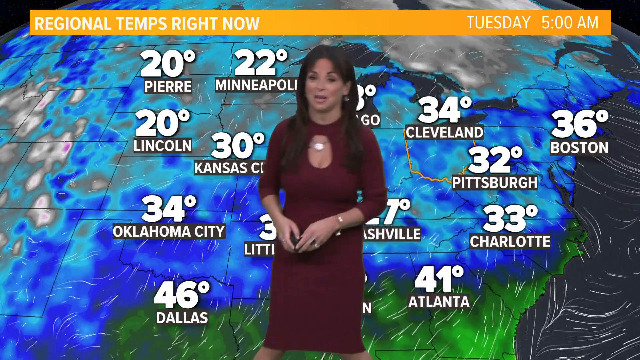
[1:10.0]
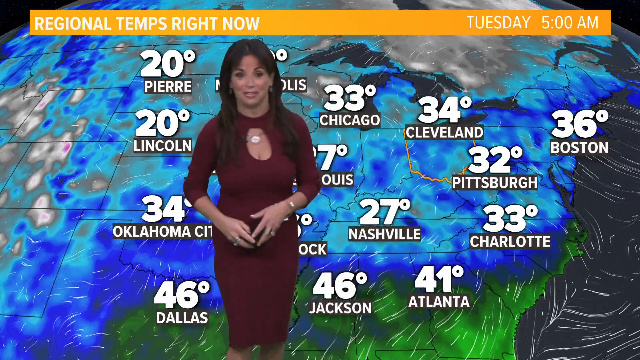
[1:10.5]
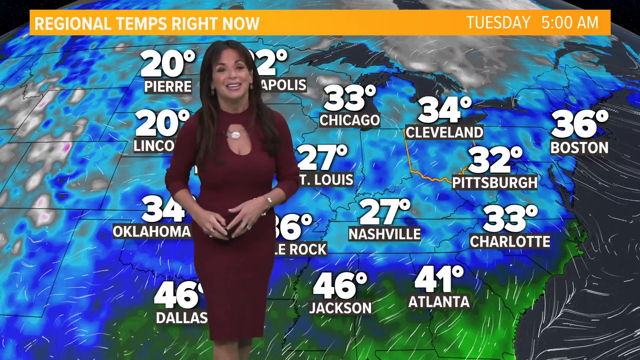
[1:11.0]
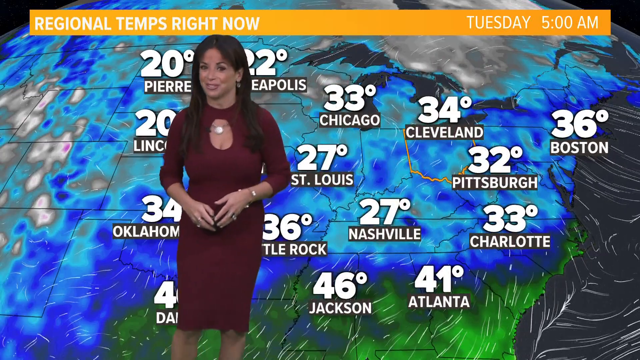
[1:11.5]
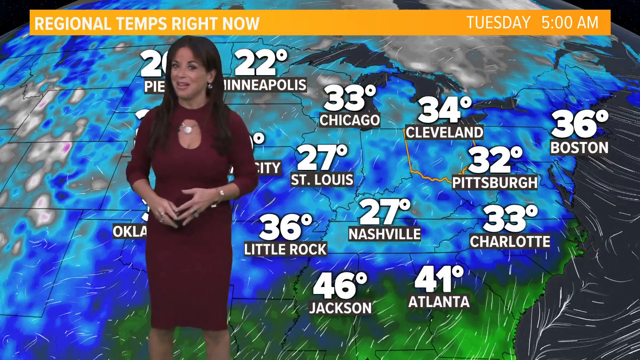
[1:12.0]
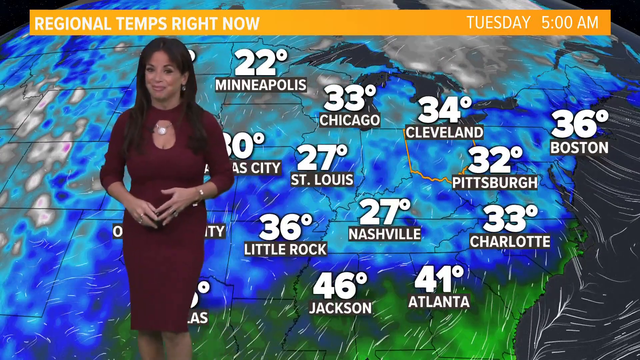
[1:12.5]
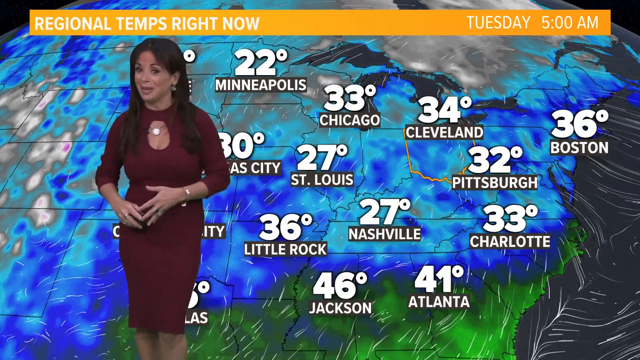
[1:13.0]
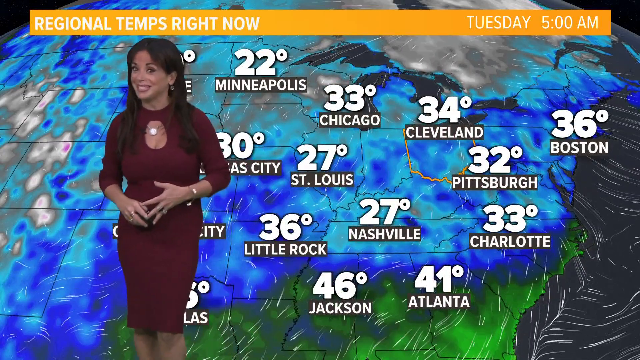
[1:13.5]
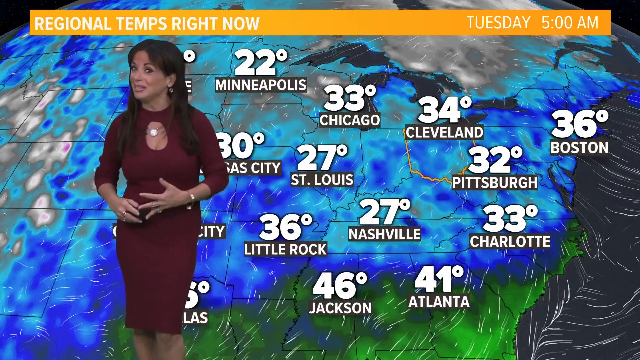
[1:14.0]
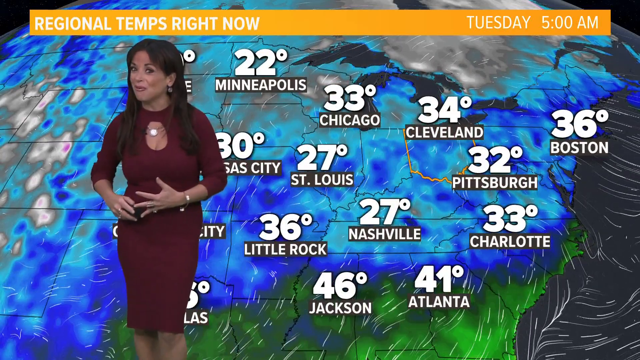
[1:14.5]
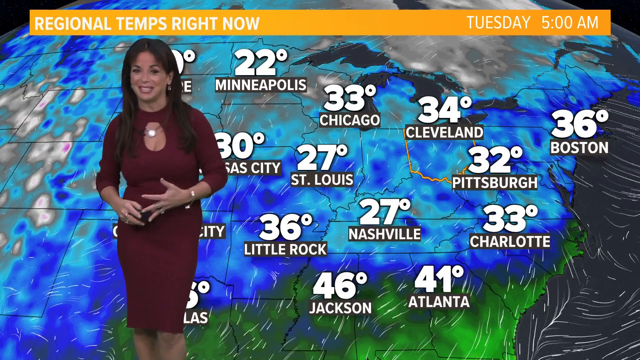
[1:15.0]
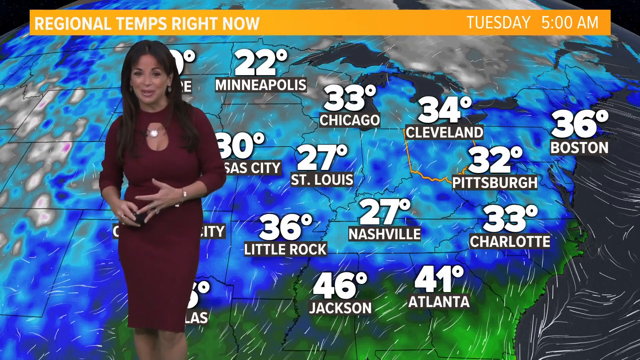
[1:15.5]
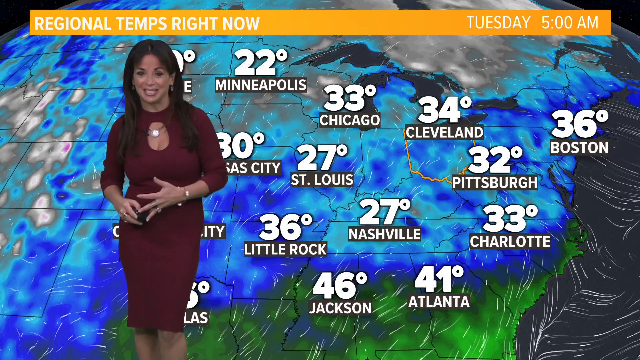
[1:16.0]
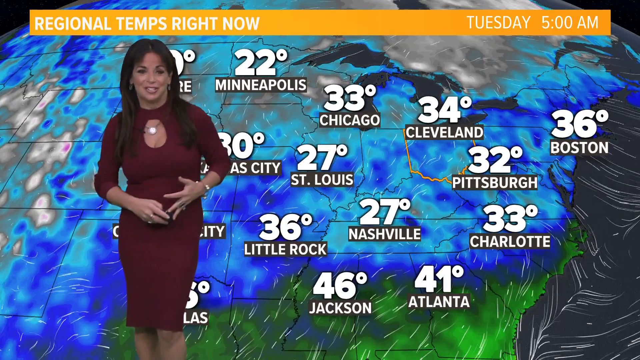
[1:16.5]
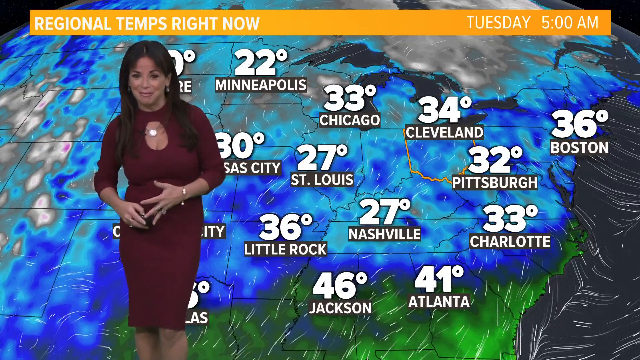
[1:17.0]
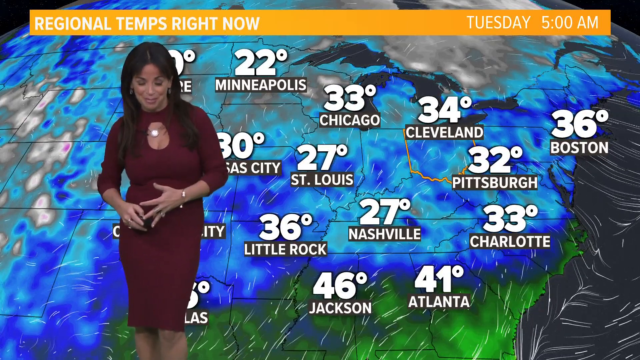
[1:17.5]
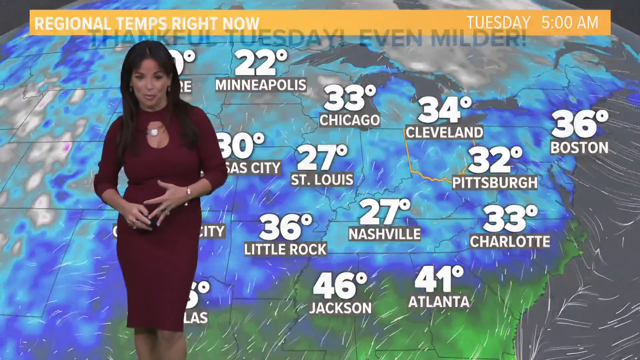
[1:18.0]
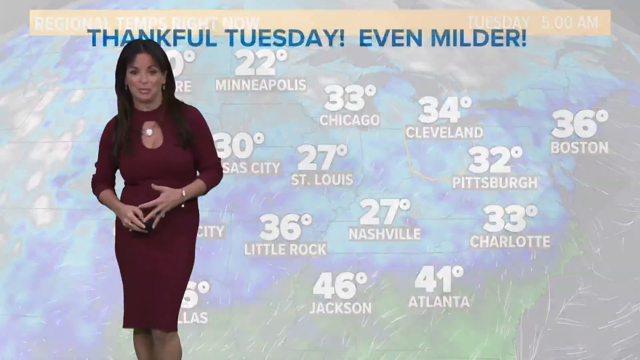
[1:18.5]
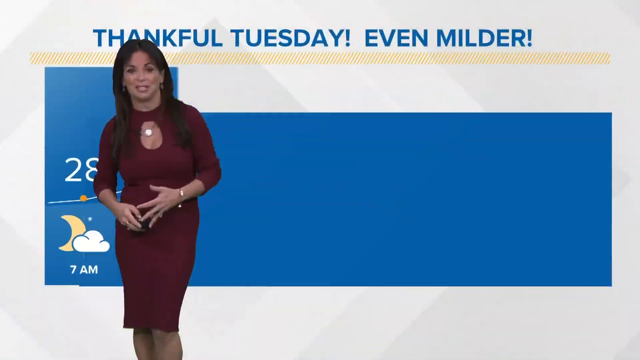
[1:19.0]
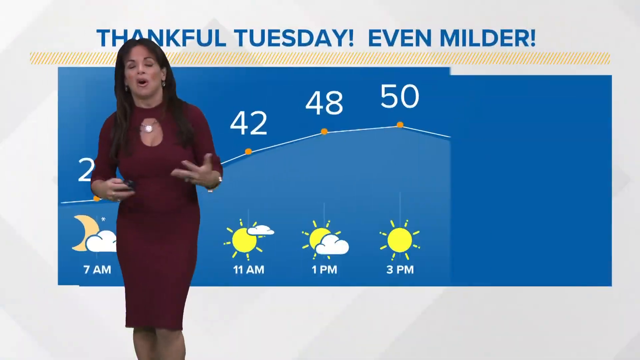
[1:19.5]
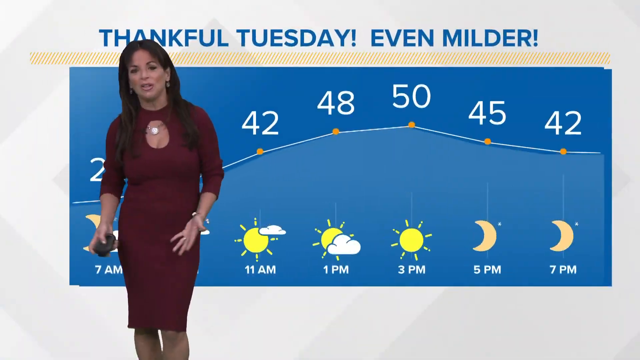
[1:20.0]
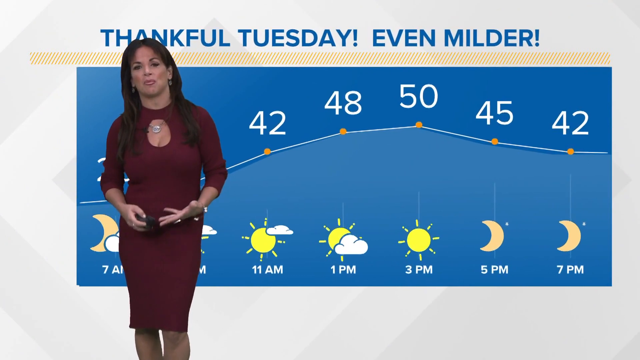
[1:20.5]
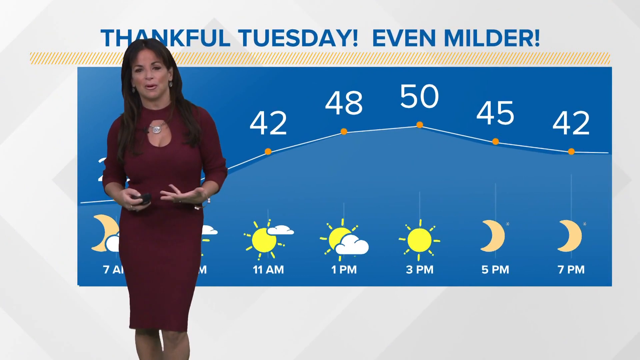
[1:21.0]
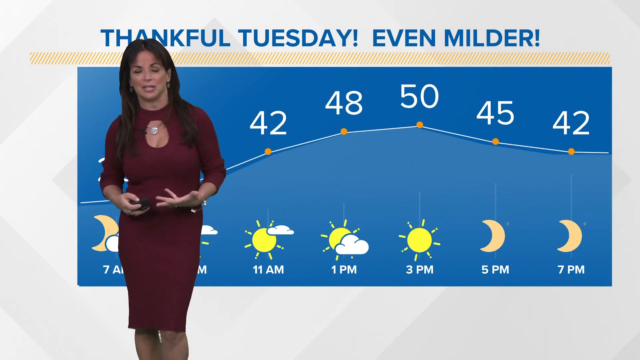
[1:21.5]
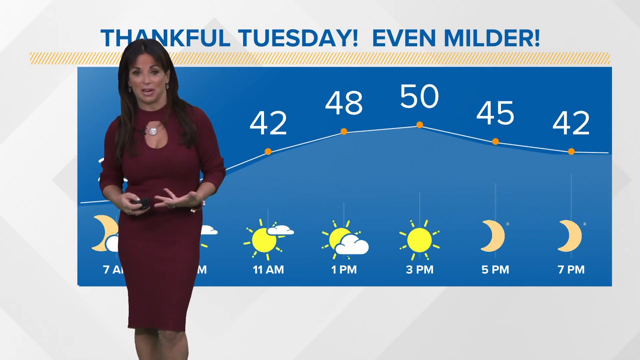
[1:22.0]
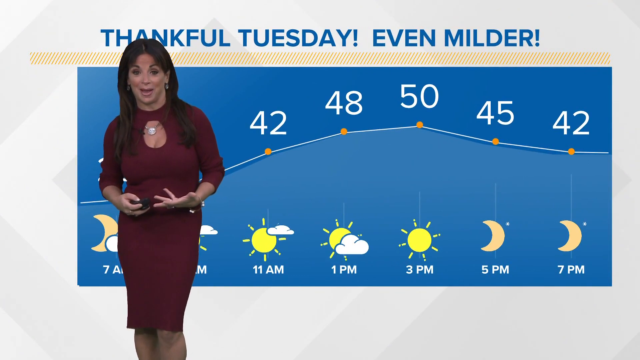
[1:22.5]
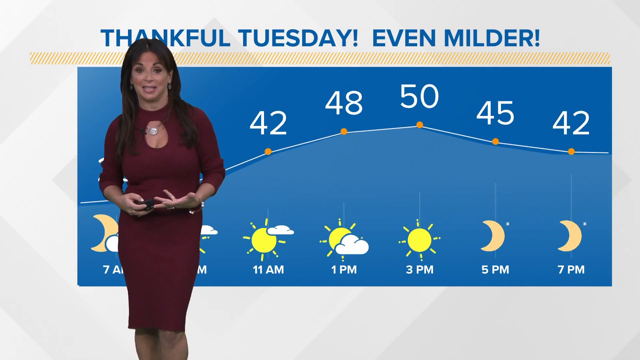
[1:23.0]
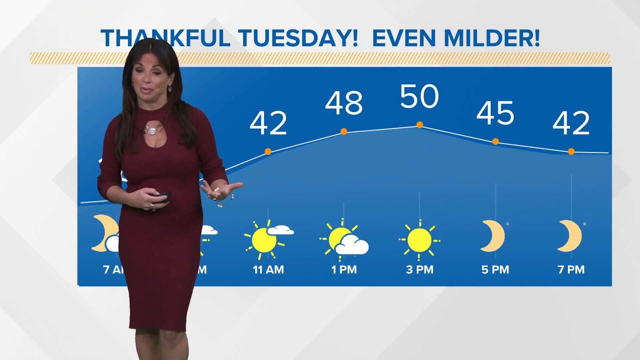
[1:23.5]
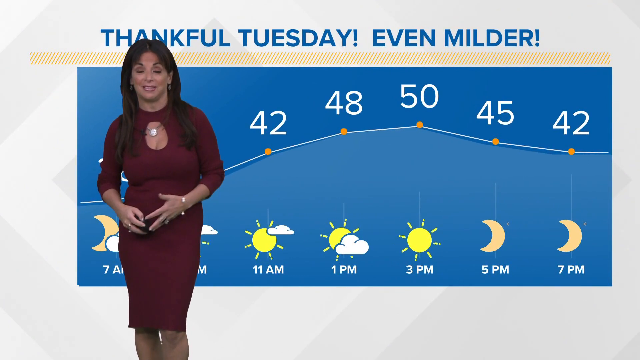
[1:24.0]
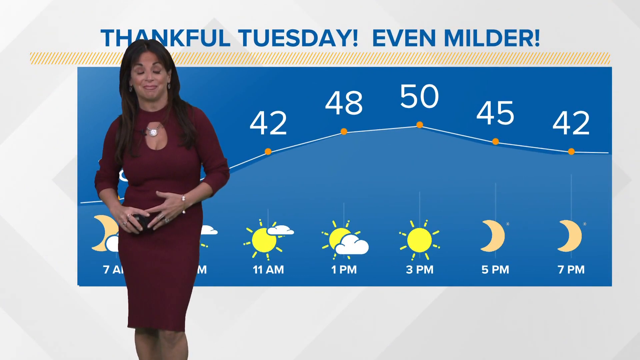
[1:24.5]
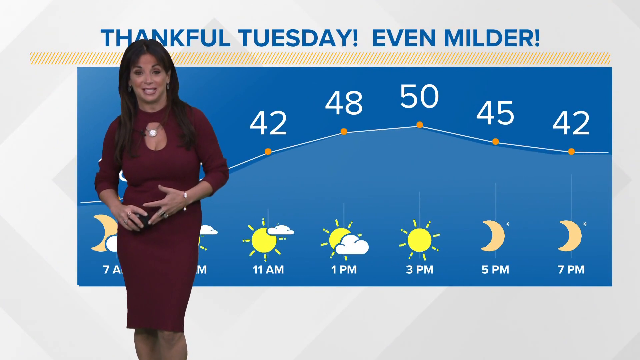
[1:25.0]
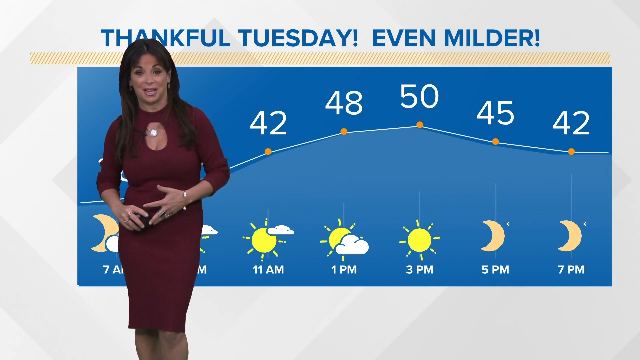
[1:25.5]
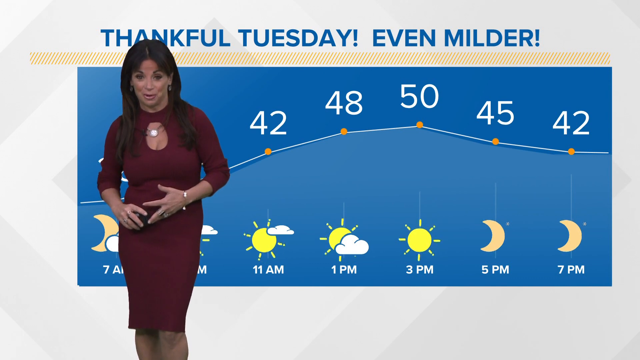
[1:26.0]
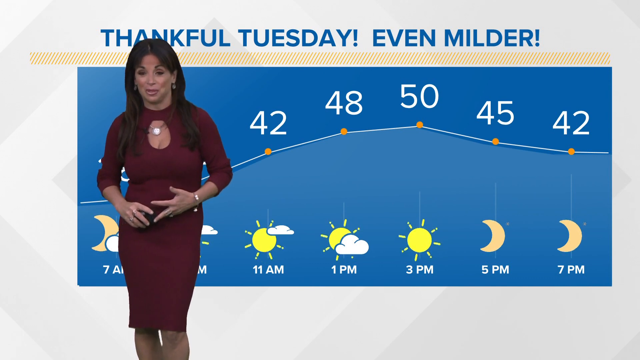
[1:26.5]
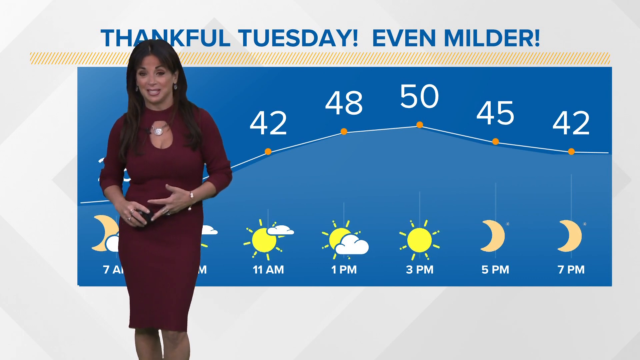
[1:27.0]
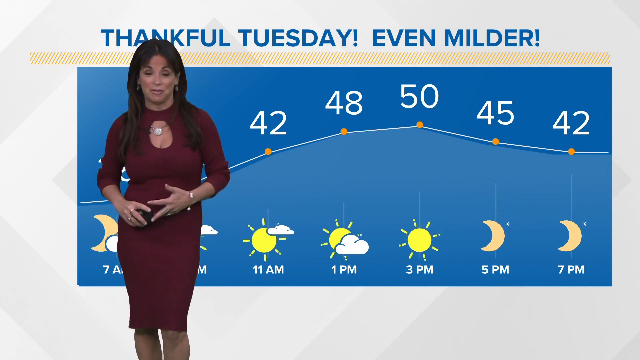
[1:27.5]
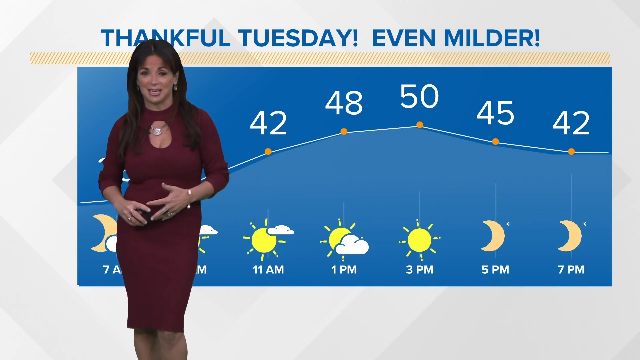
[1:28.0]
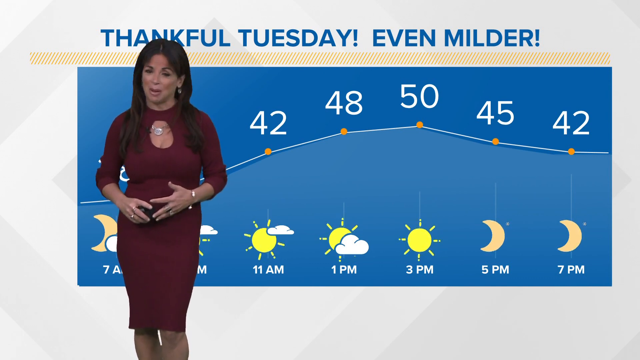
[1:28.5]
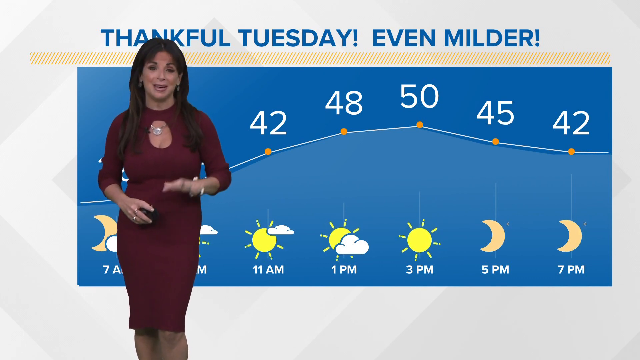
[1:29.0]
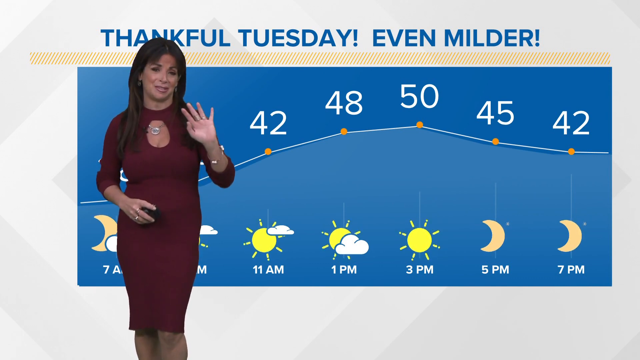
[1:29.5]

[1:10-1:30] The woman covering the weather for a news station is on the left side of the screen, gesturing. An orange banner at the top reads "Regional temps right now," with "Tuesday, 5 a.m." to its right. Behind her is a map showing temperatures in various states of the United States; all are fairly cold, with the southern temperatures warmer than the northern ones. The screen then transitions to another graphic reading "Thankful Tuesday, even milder." It shows pictures of the sun, clouds and crescent moons with temperatures that increase depending on the time of day. The lowest temperatures appear to be at 7 a.m., and the highest are at about 3 p.m., when the temperature is 50 degrees.